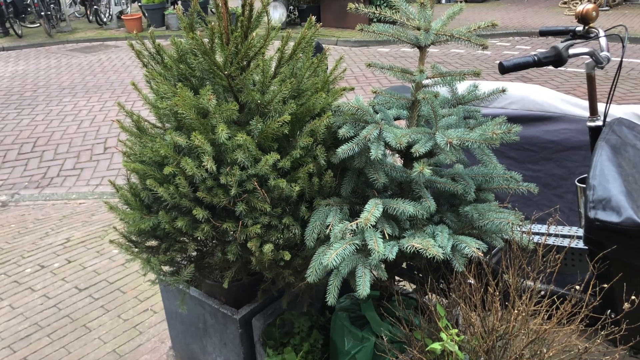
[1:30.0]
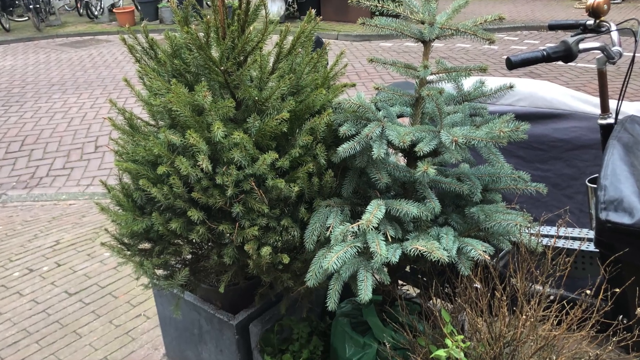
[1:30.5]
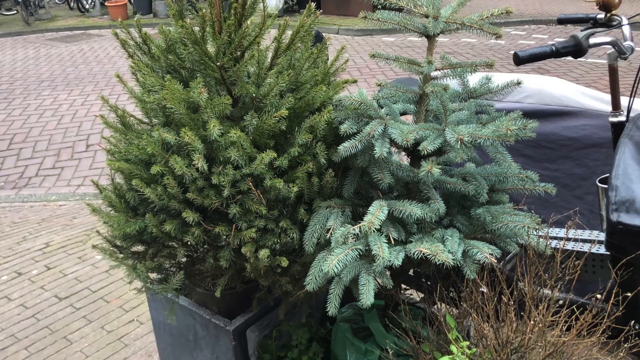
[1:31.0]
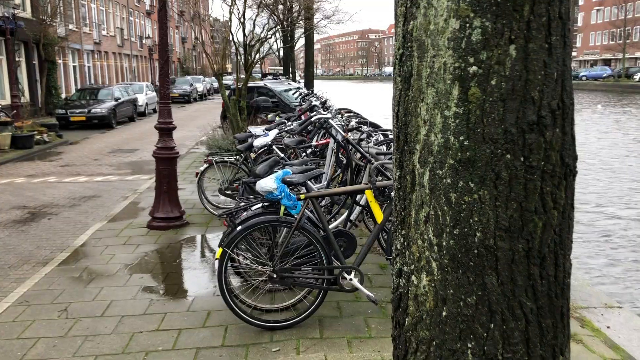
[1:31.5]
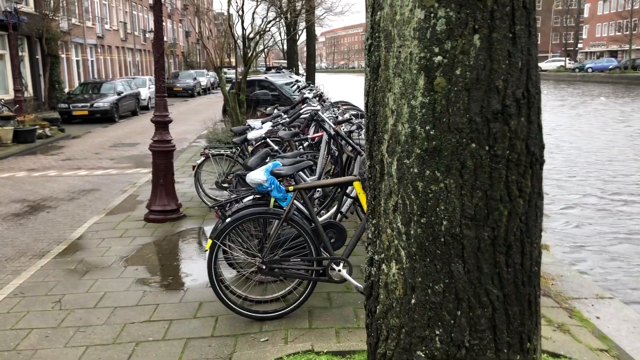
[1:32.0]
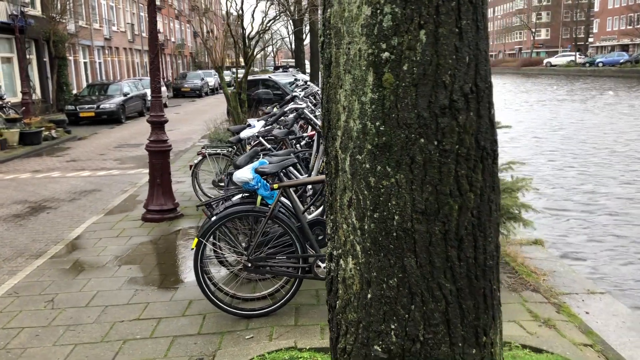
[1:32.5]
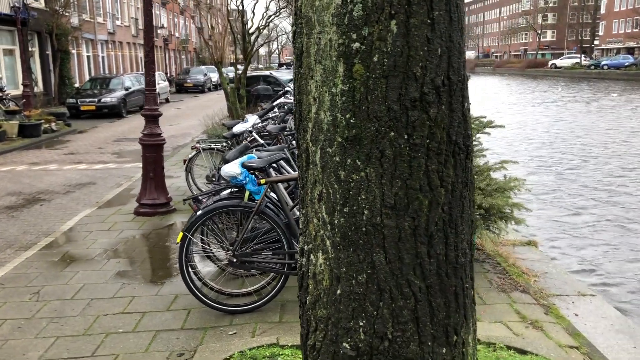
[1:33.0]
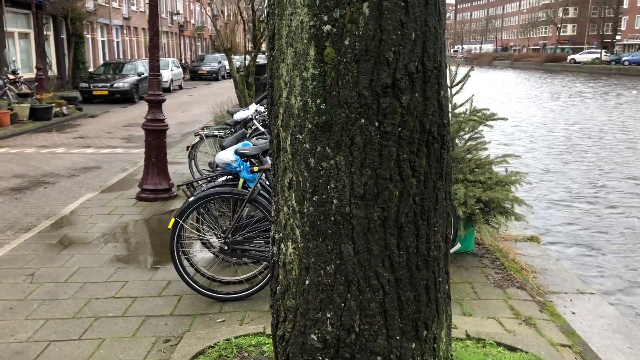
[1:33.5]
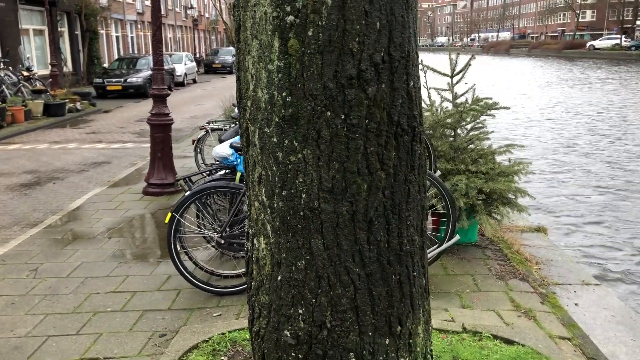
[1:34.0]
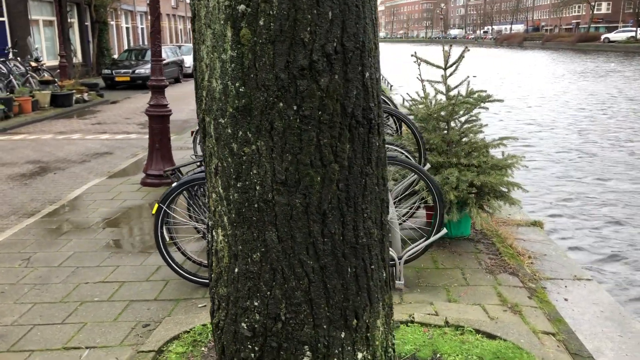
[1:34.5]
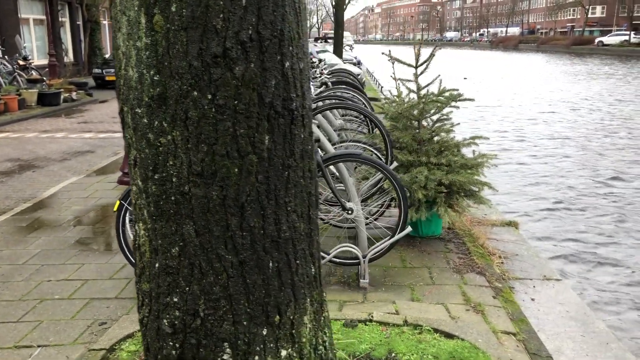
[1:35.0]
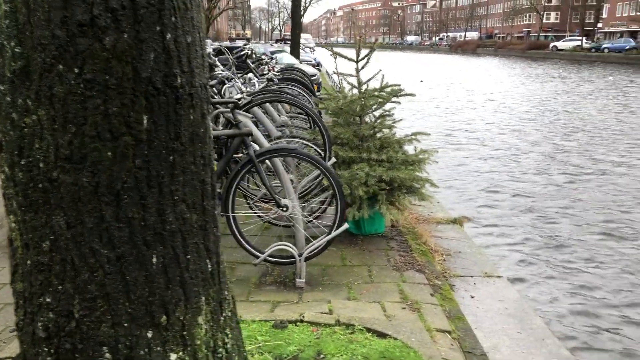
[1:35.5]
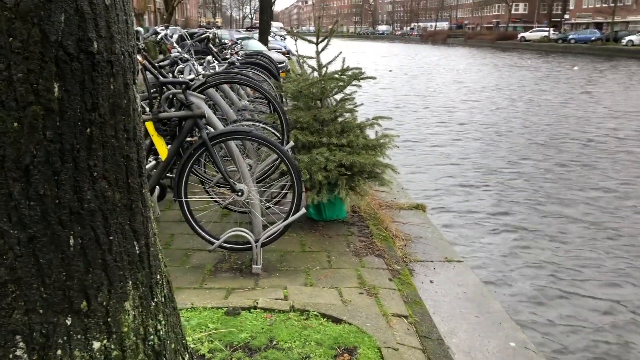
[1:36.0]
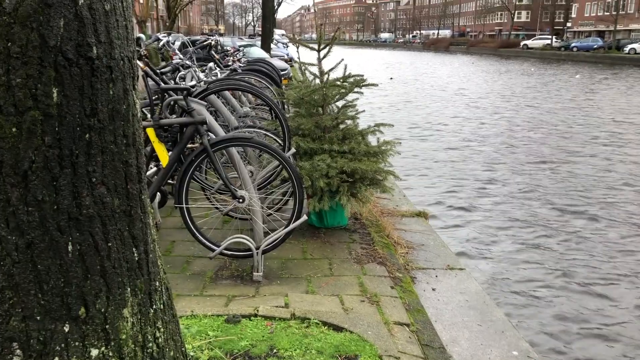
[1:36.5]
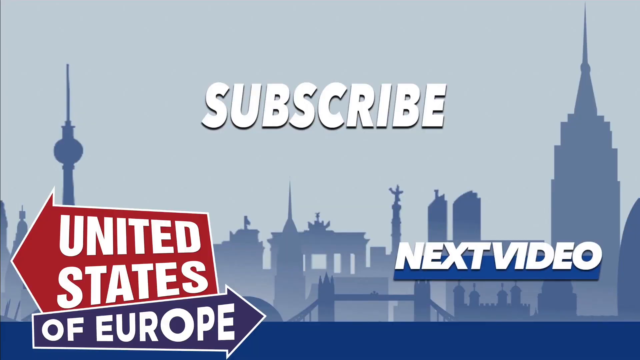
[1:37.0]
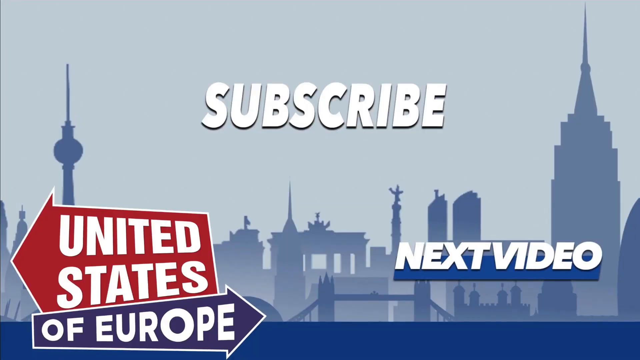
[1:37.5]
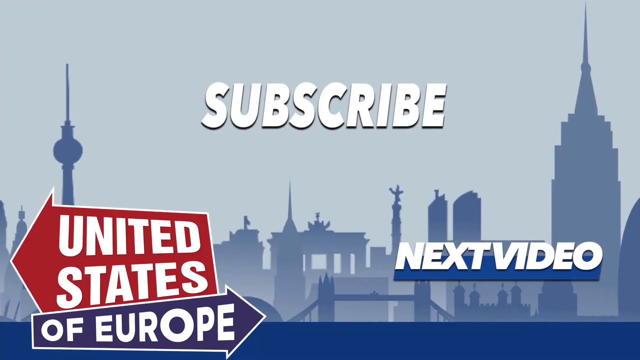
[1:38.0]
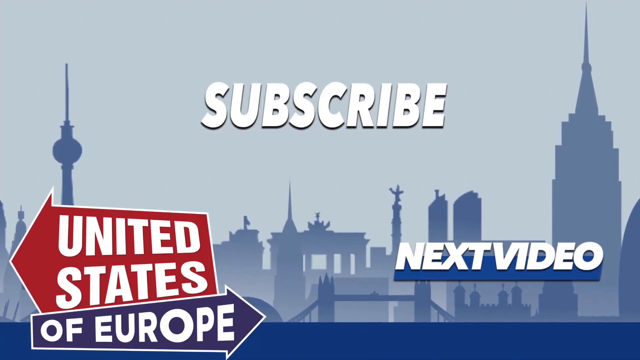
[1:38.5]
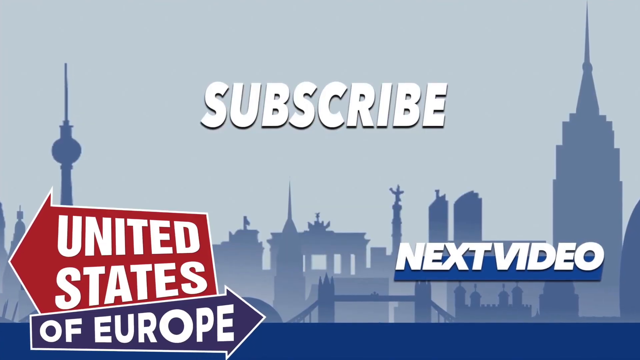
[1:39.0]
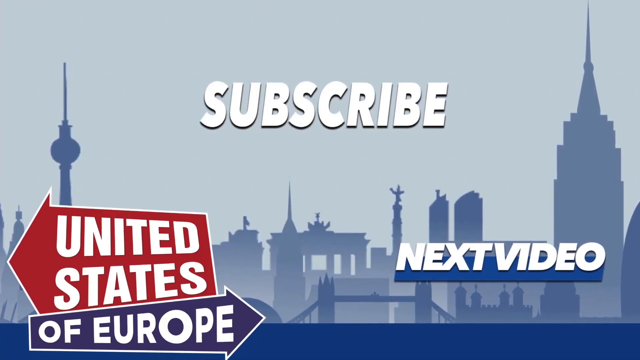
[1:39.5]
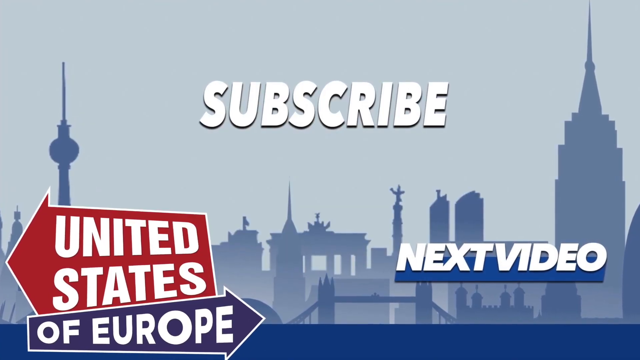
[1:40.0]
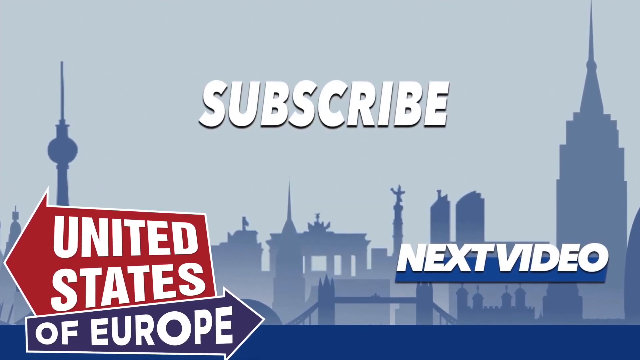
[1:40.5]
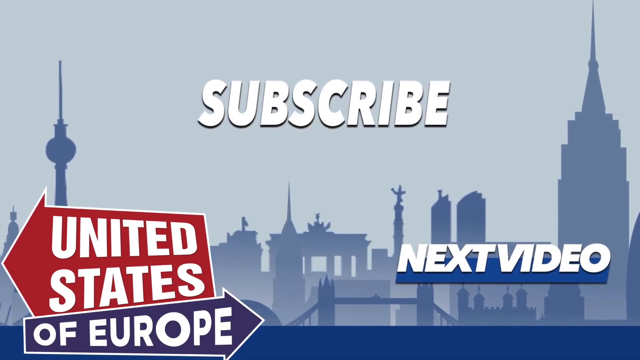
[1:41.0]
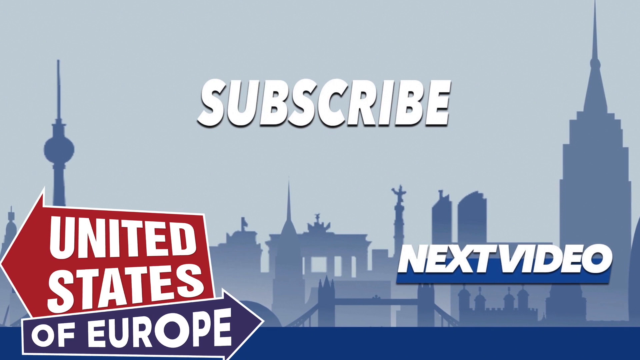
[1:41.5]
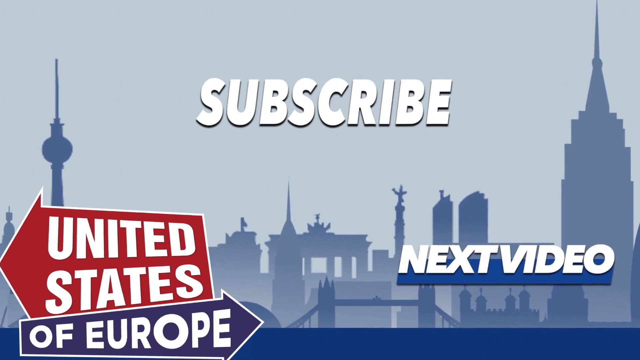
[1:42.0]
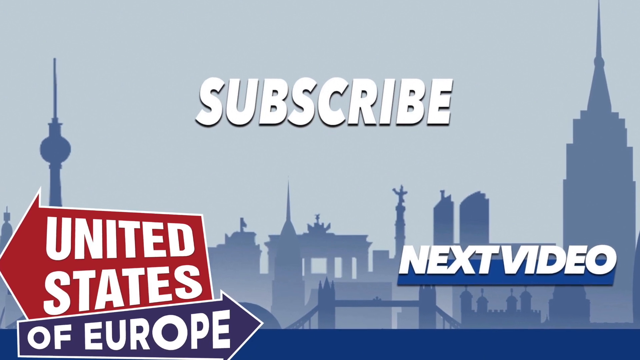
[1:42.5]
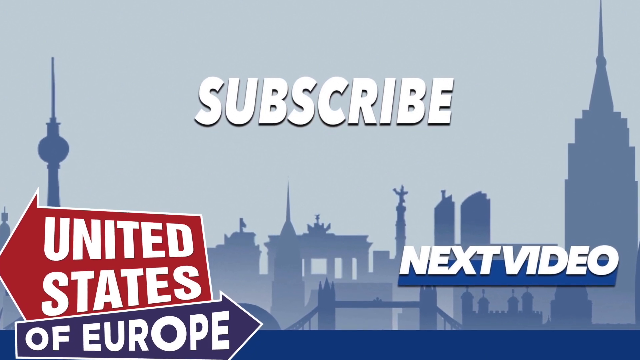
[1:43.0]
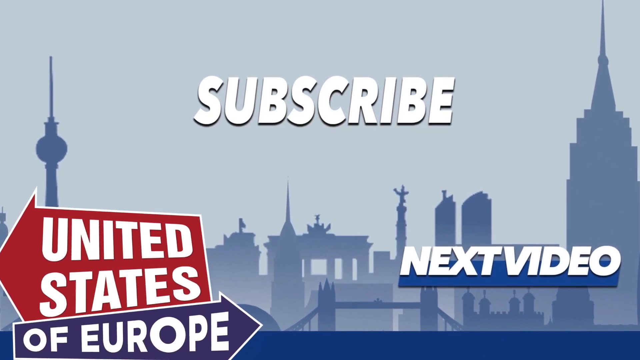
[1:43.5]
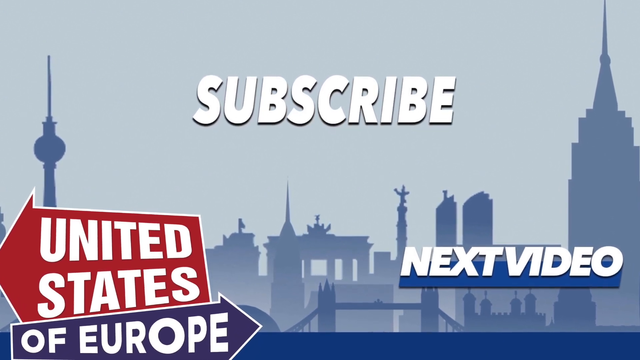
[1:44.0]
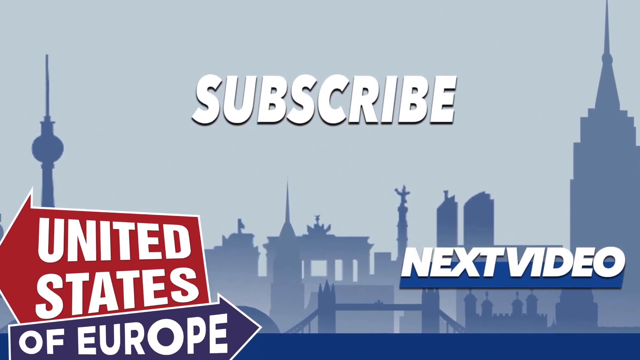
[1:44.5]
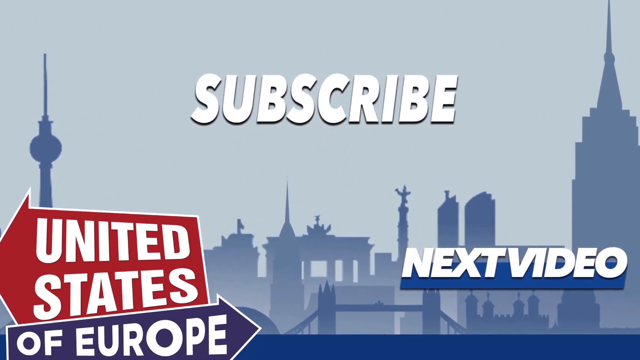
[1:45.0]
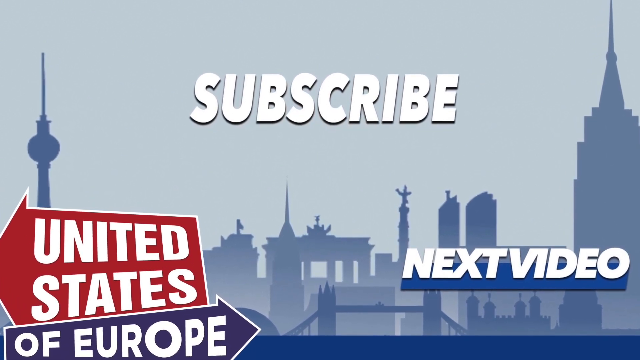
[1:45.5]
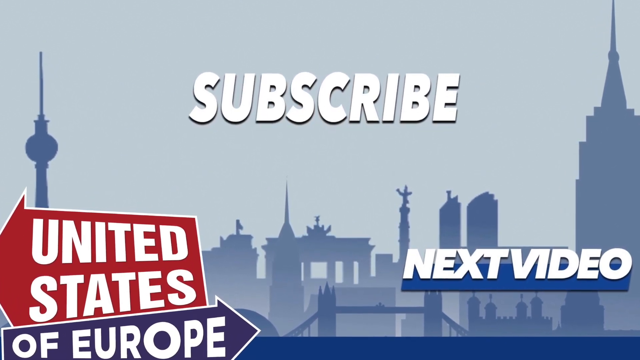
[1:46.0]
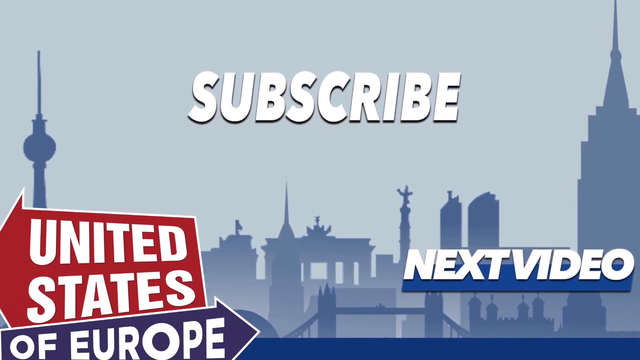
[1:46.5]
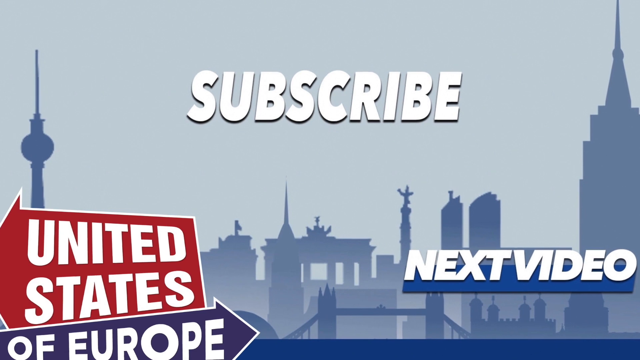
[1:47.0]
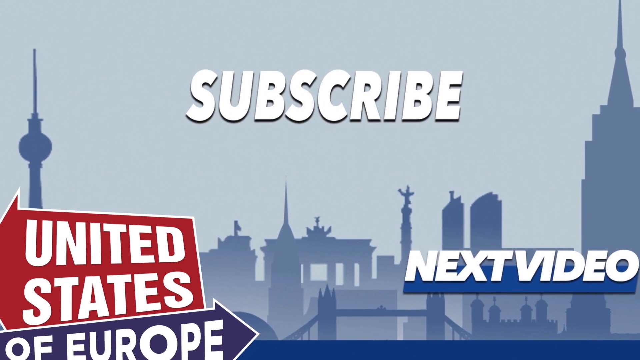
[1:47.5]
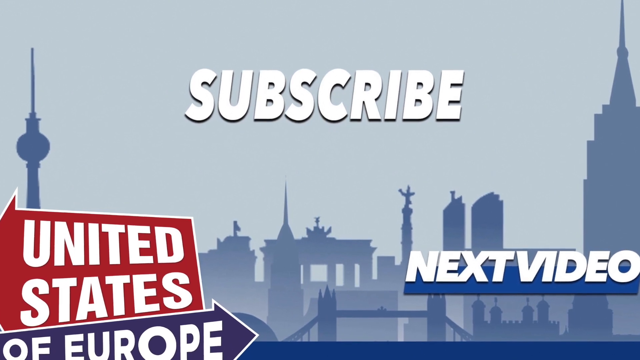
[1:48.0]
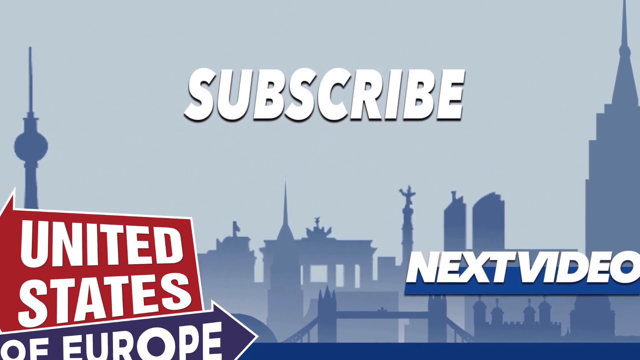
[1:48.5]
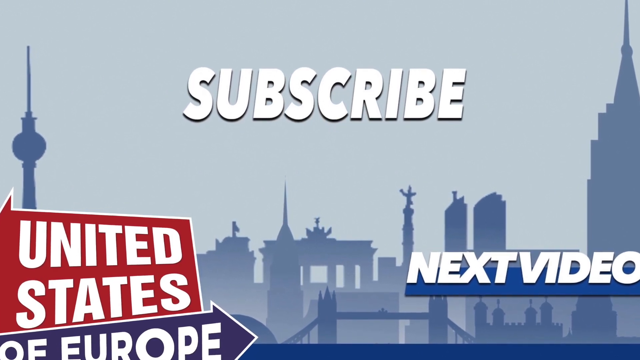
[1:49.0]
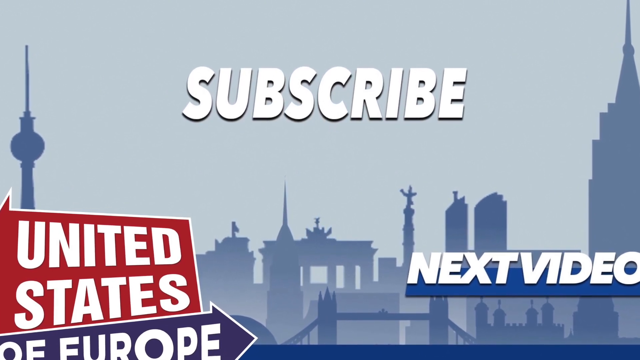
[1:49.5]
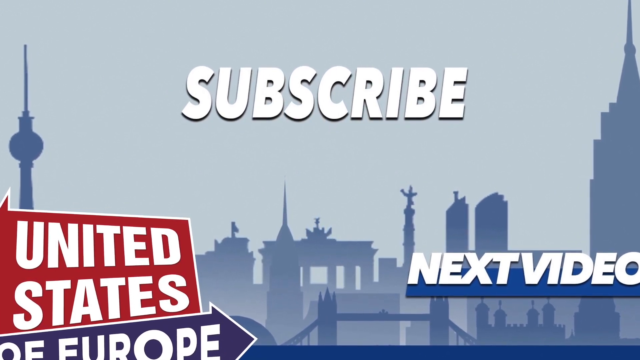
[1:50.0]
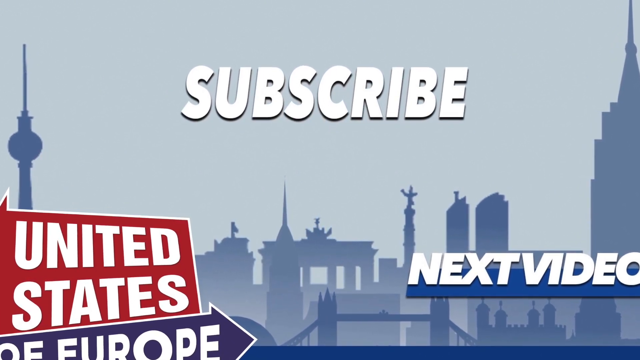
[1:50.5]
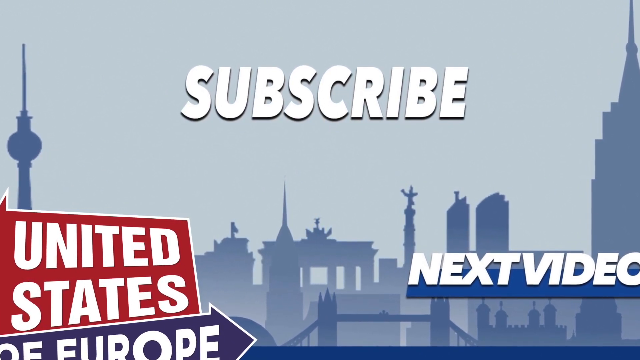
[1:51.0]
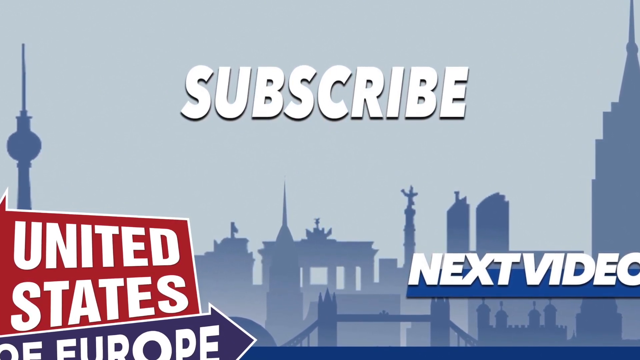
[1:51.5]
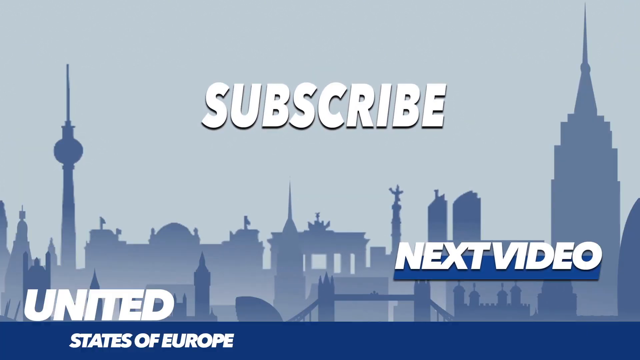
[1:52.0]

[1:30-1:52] There is a waterway. Many bicycles are neatly stacked and parked, the cars are neatly parked, the pavements are clean, and the plants by the pavements look very healthy. A white person is busy gardening and pruning. People remove branches of trees that have been blown down and put them into trash trucks, and at one point the branches are put into a grinder. There are cars with yellow plates and Citroen cars. A worker wearing an orange reflector puts blown-down branches into a truck, helping clean the streets.